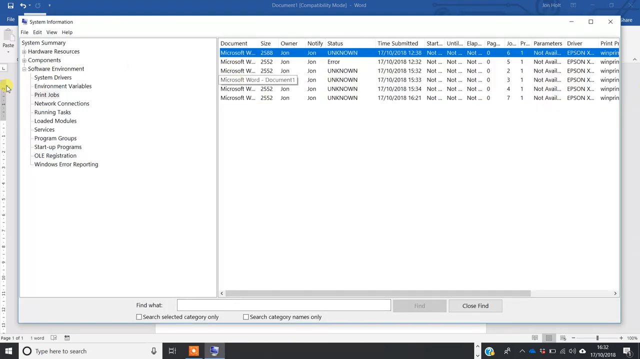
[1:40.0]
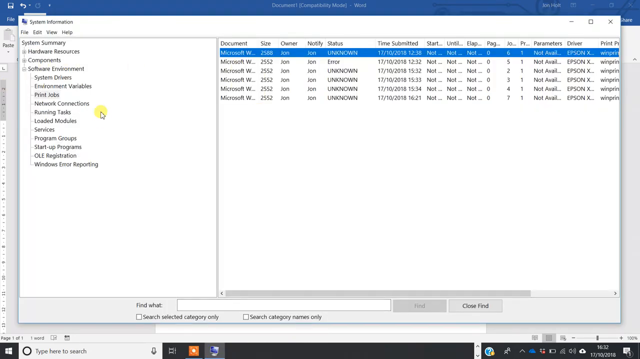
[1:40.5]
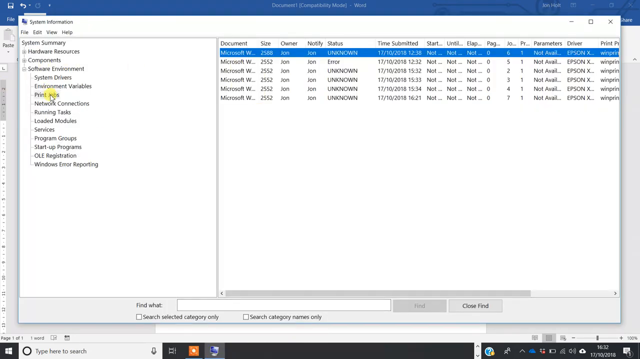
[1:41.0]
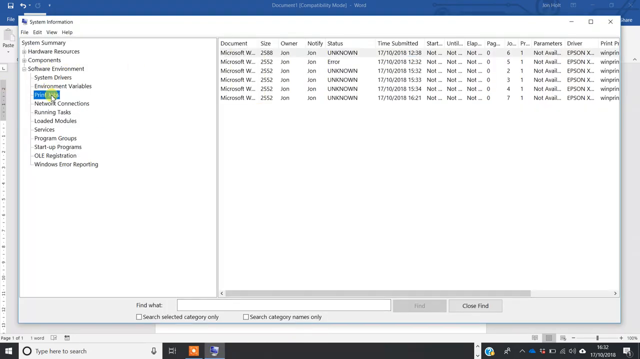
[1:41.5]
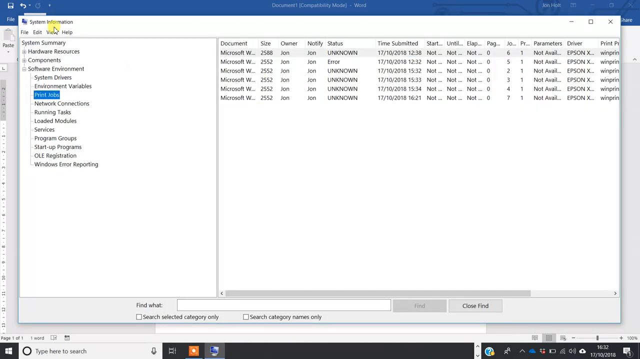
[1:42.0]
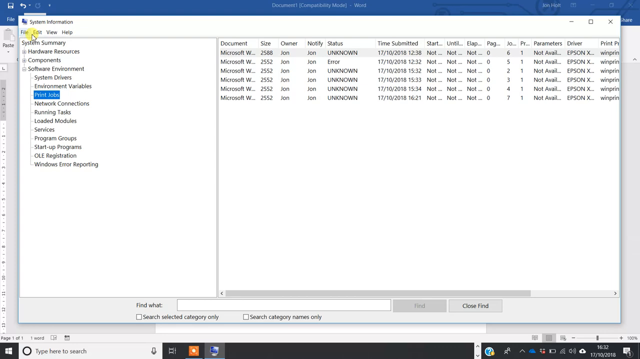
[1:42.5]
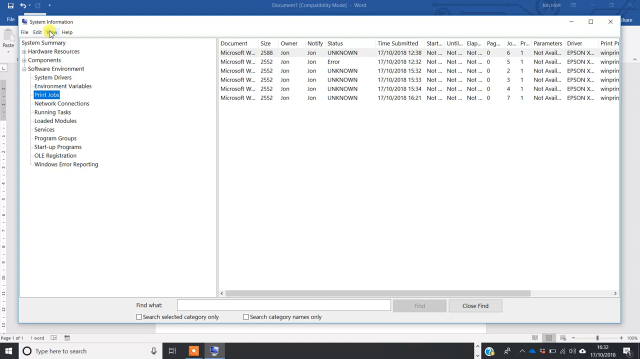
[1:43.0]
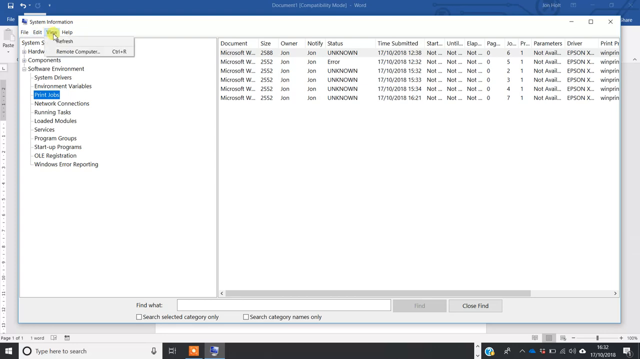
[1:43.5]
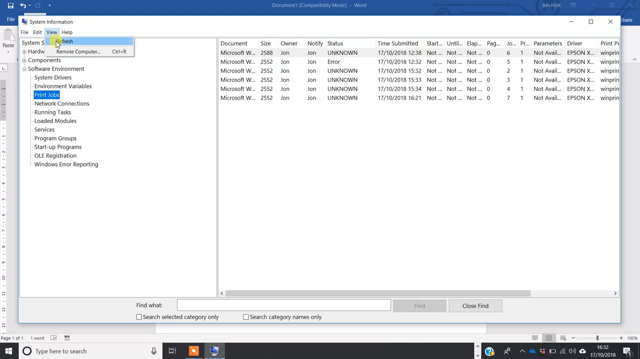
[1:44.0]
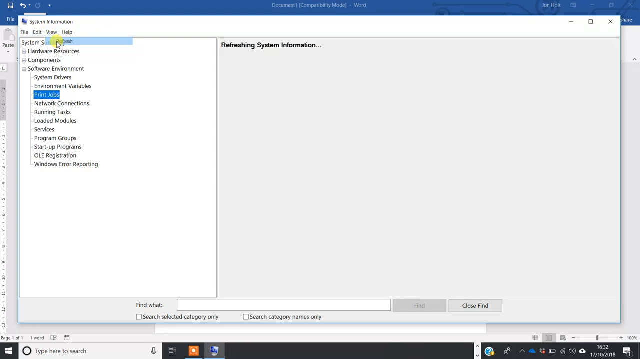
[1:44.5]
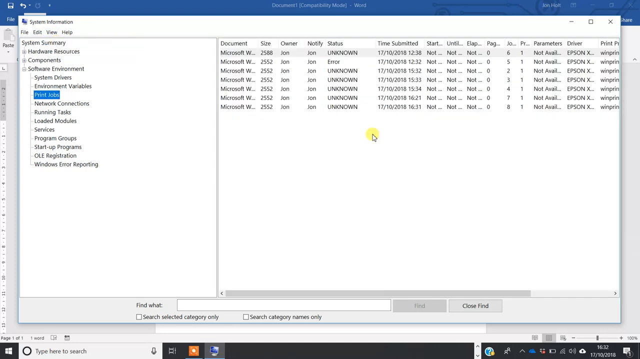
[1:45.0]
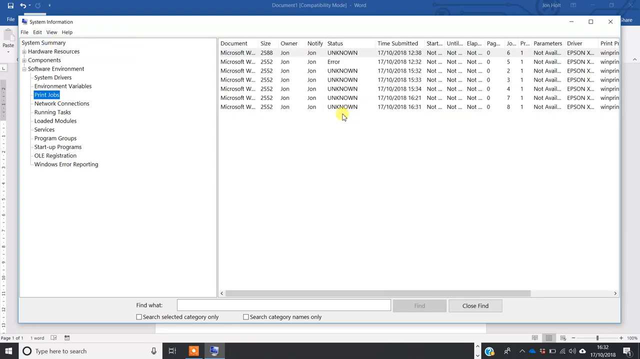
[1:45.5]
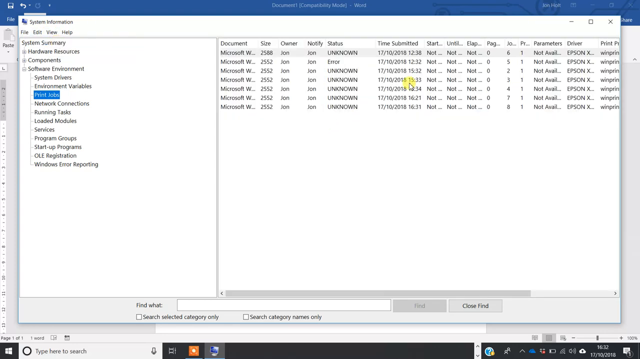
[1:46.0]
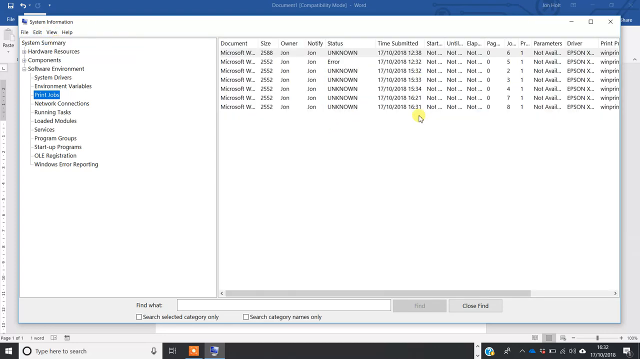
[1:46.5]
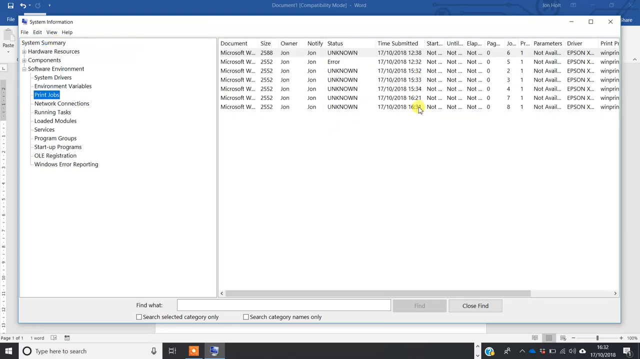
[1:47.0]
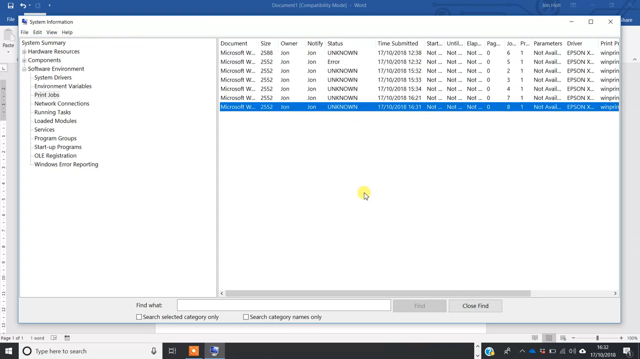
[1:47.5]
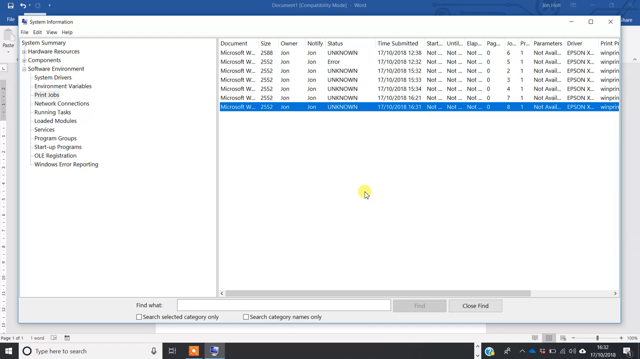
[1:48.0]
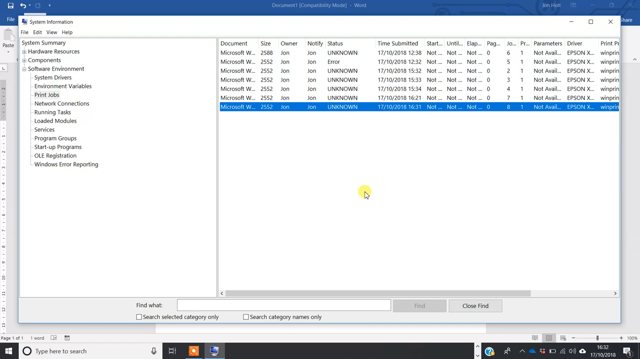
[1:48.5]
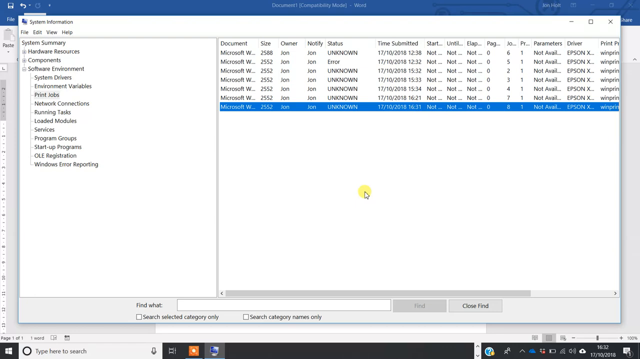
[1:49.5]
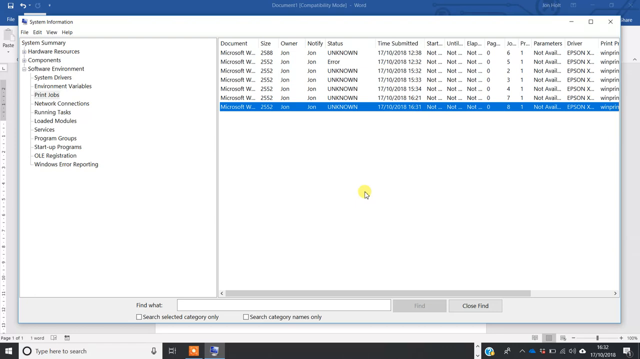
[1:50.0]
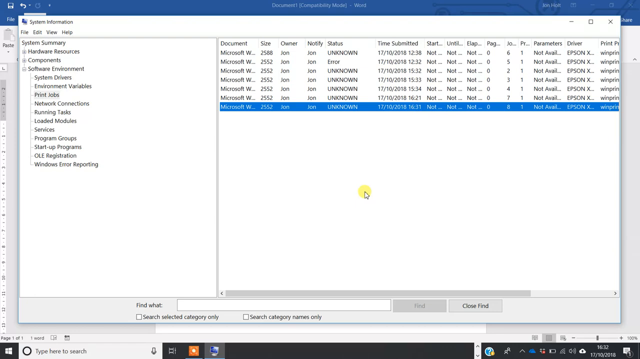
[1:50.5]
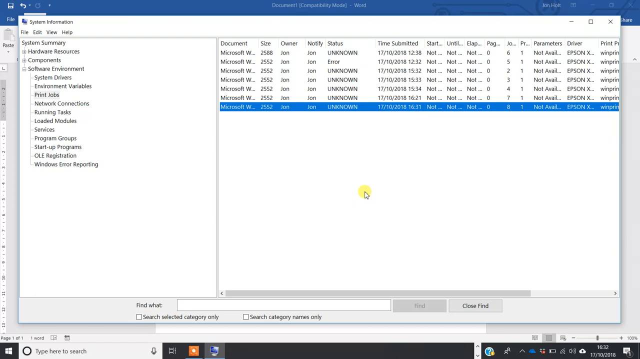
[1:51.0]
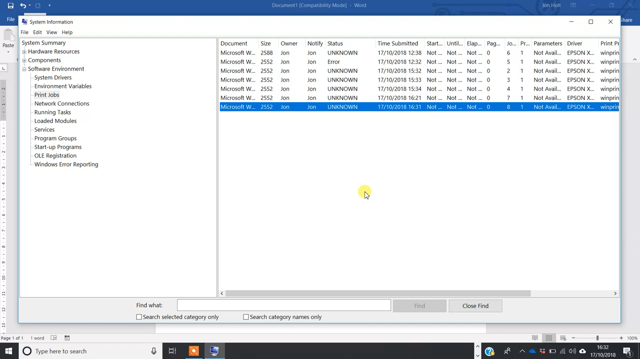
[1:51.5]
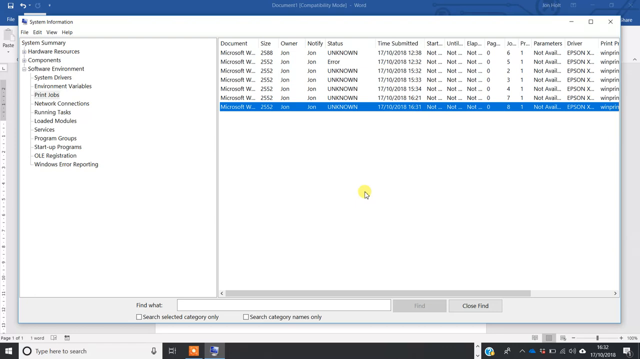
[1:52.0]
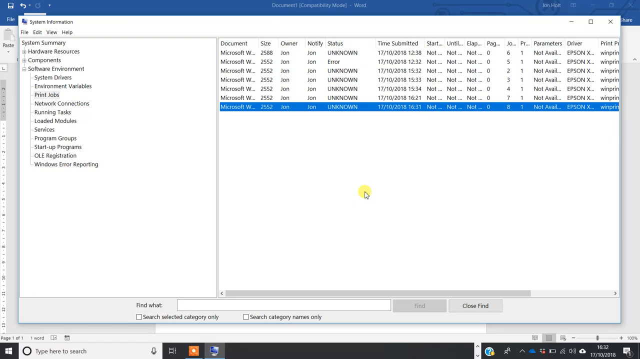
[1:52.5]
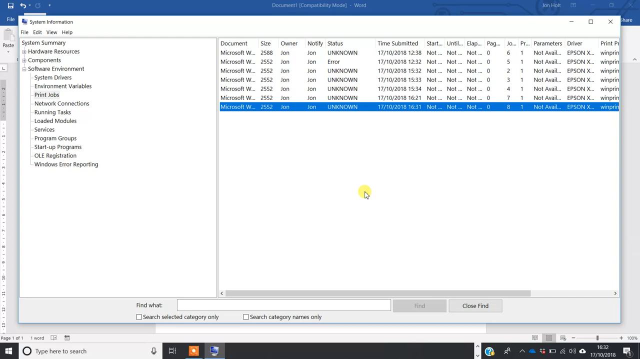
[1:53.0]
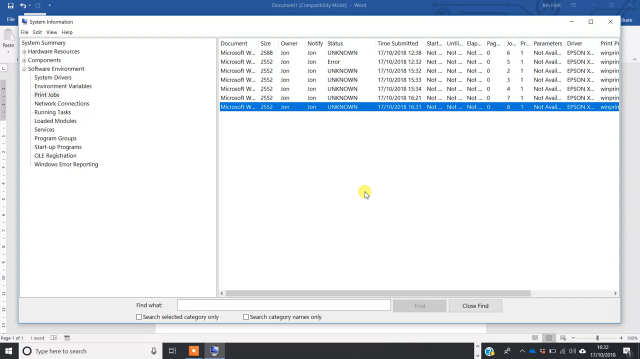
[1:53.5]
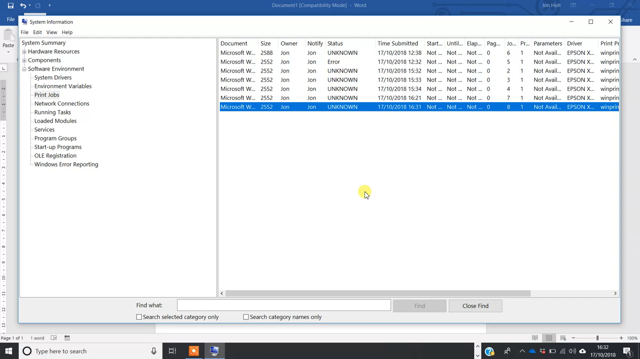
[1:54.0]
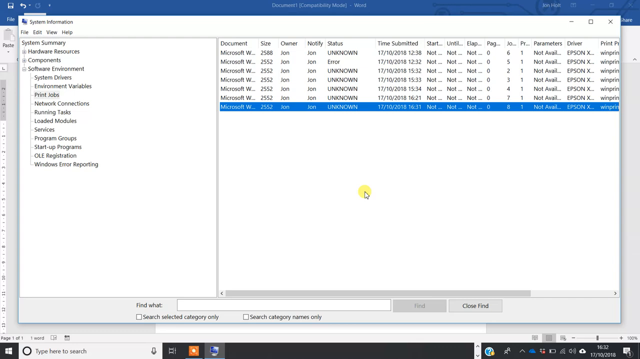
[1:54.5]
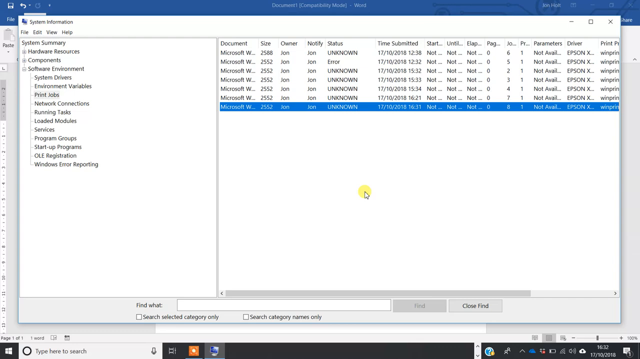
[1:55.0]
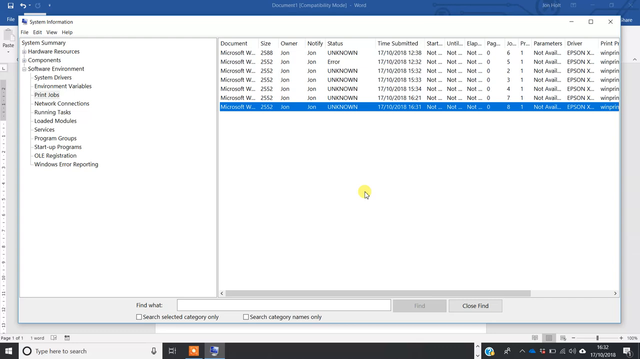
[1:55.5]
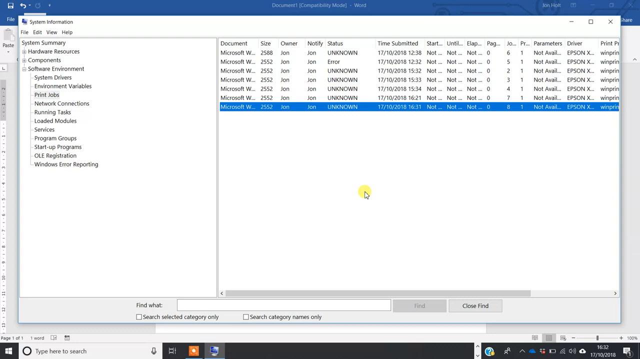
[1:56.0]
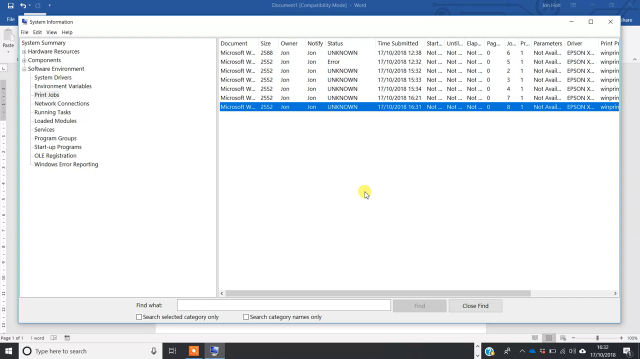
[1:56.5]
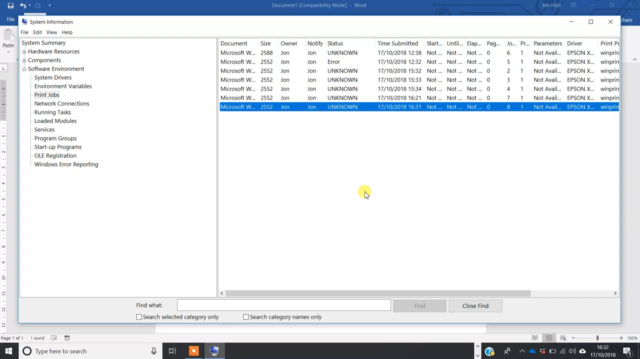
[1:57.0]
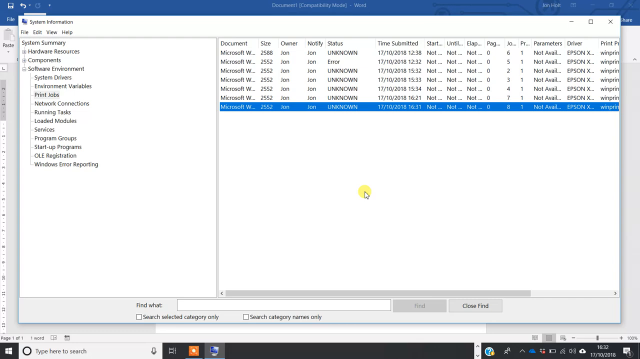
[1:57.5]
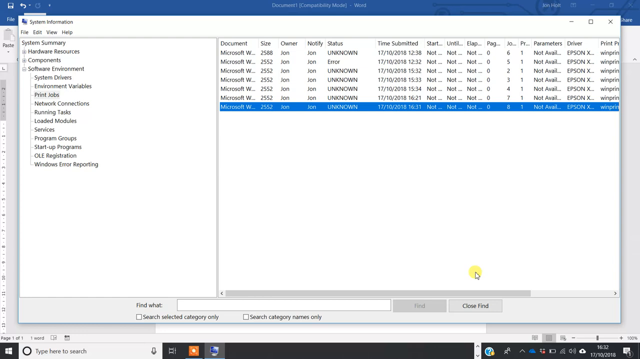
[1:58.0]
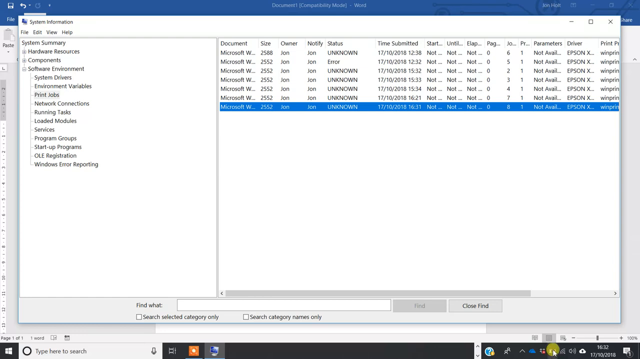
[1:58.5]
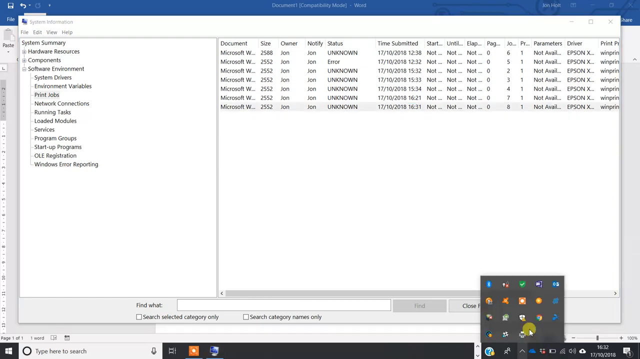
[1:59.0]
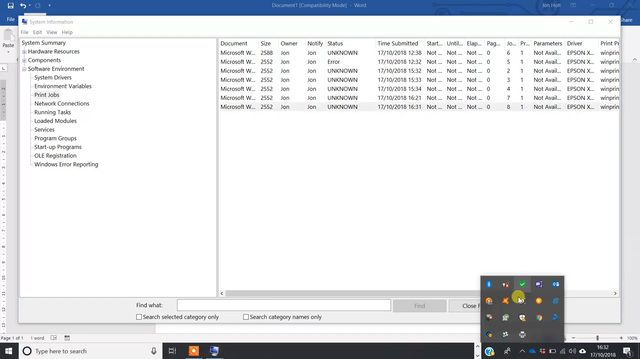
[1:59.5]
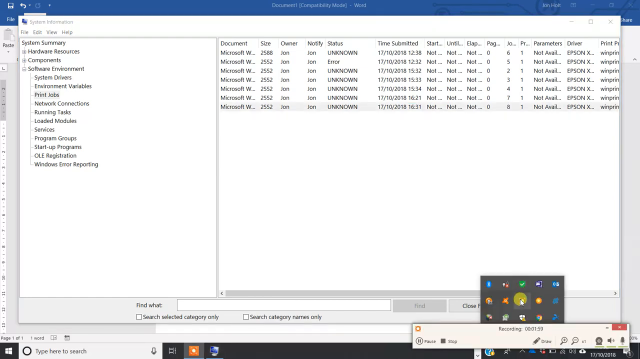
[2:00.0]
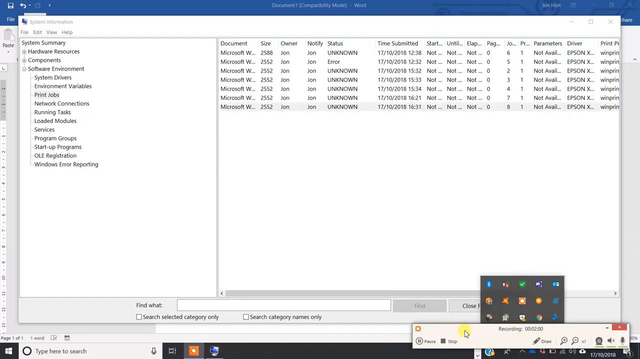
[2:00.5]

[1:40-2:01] With both the Word document and the print jobs section open, the user navigates to the view section of the System Information panel and highlights the last print job at the bottom of the list. The cursor then clicks at the bottom right, where the open programs are, bringing up a pop-up with about a dozen different colored icons, and one of them is selected, seemingly possibly to save or recover the document. The print jobs list appears to reflect the open document, which is visible behind the System Information panel.